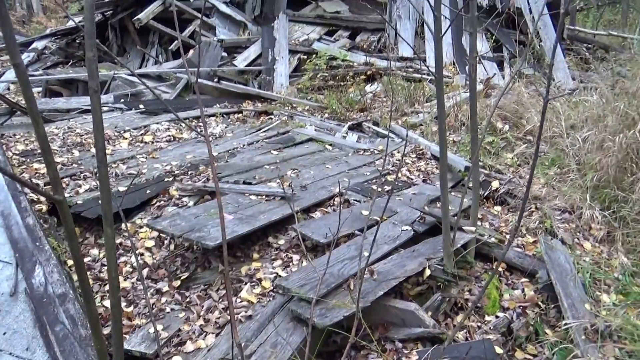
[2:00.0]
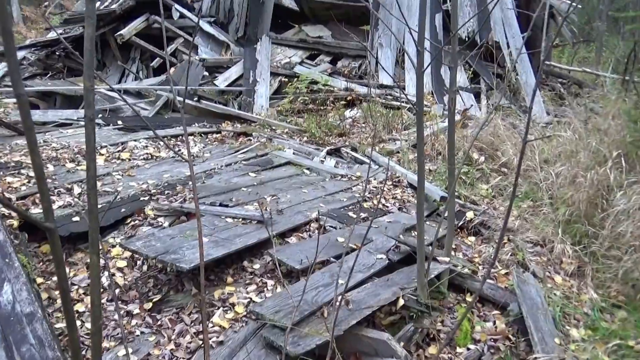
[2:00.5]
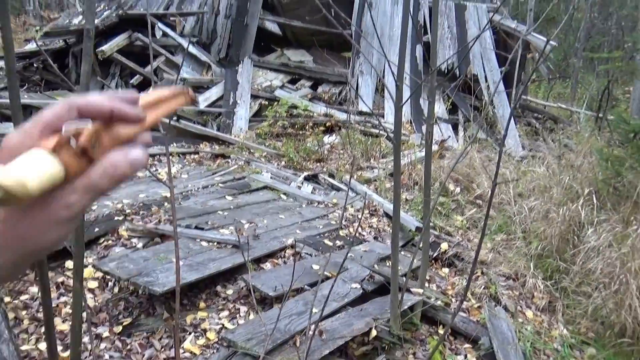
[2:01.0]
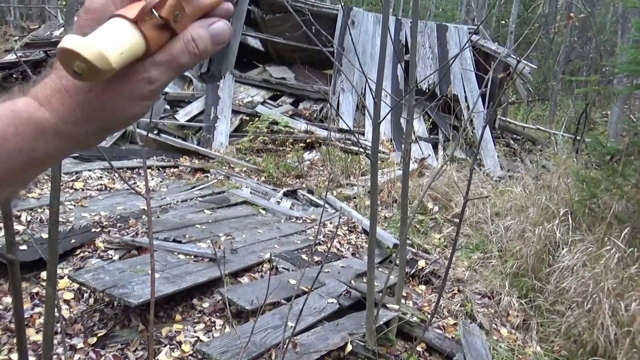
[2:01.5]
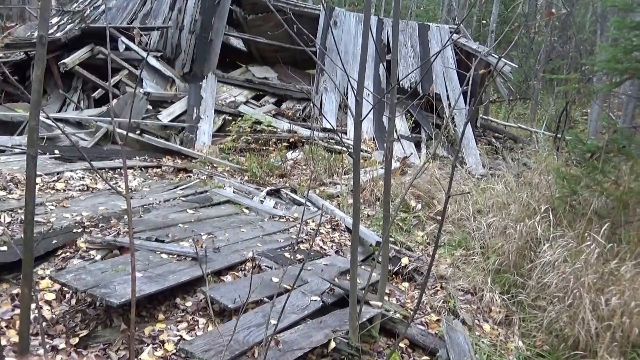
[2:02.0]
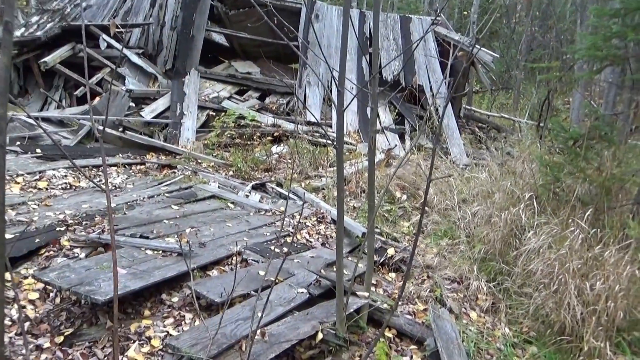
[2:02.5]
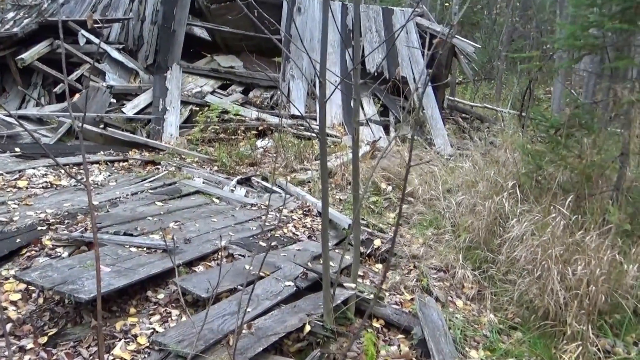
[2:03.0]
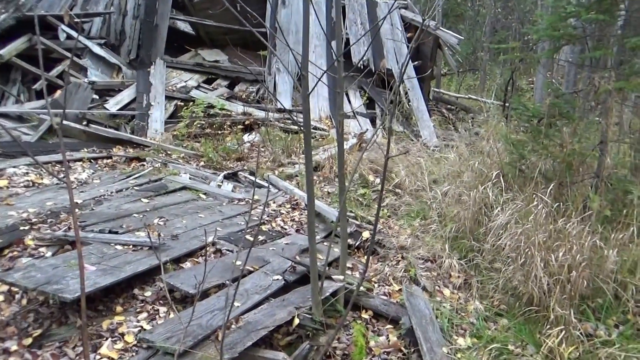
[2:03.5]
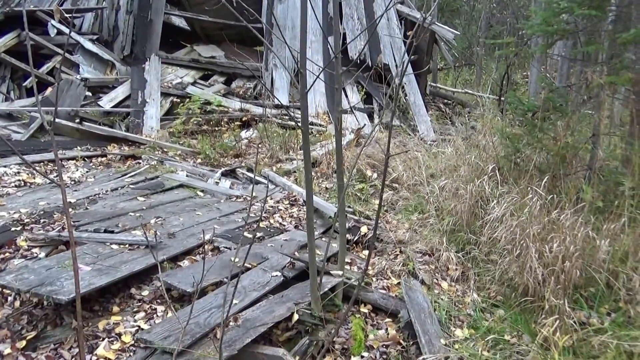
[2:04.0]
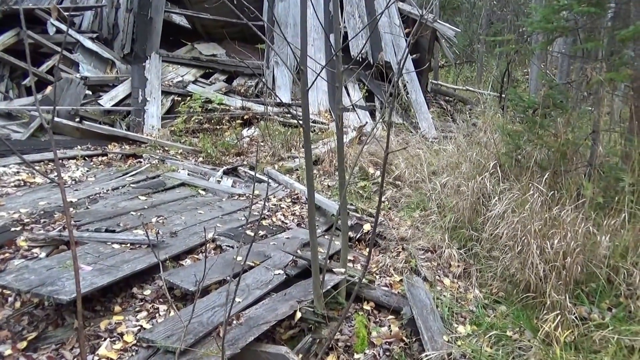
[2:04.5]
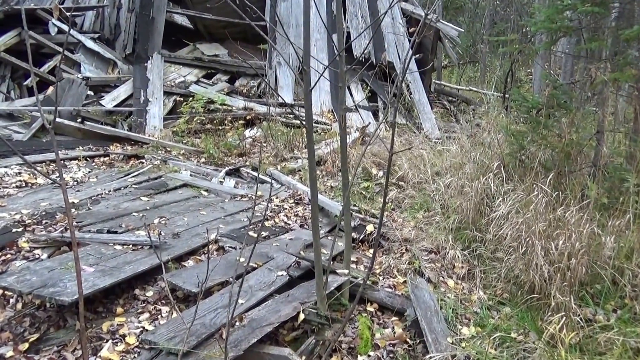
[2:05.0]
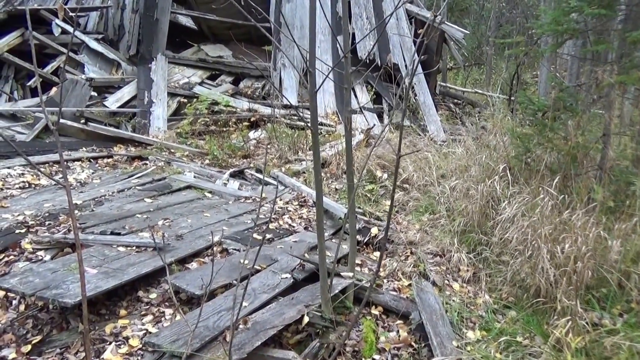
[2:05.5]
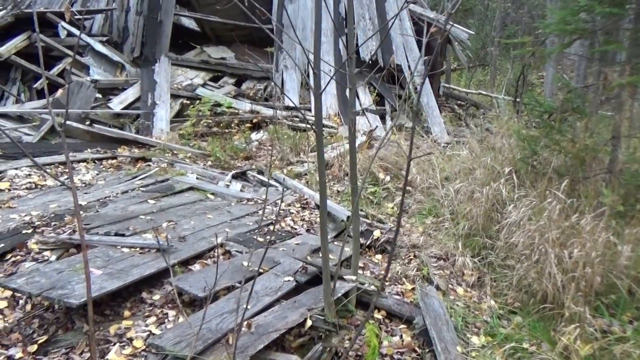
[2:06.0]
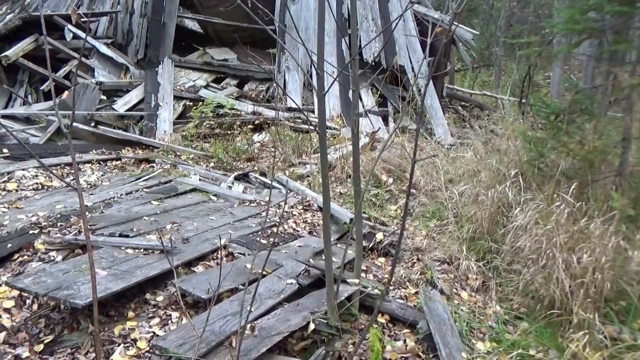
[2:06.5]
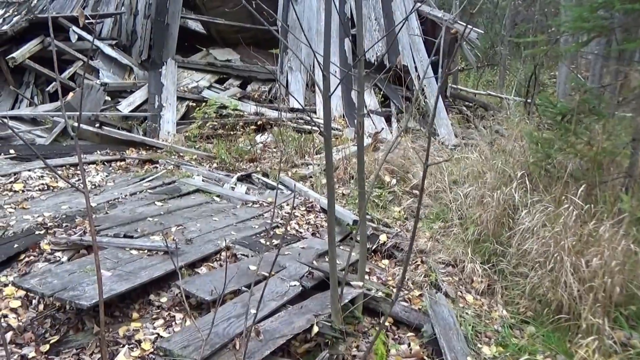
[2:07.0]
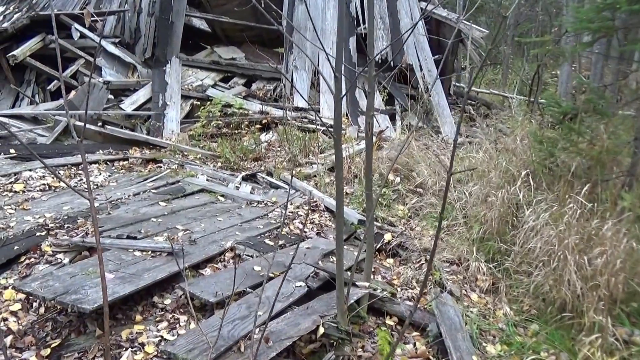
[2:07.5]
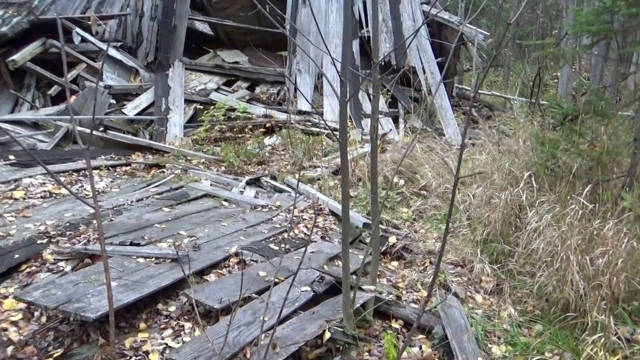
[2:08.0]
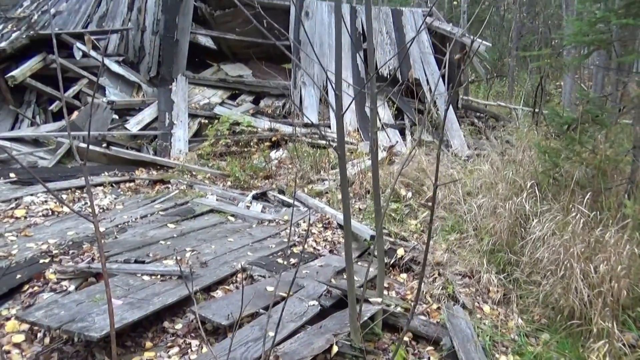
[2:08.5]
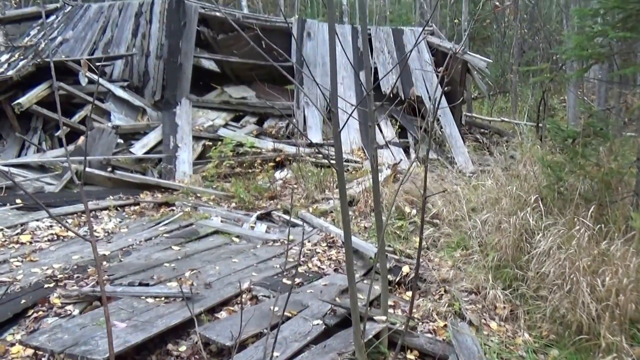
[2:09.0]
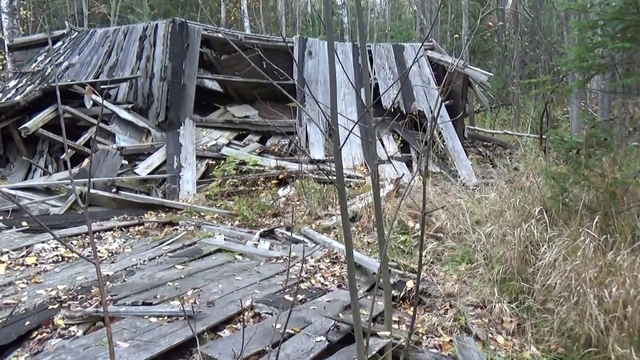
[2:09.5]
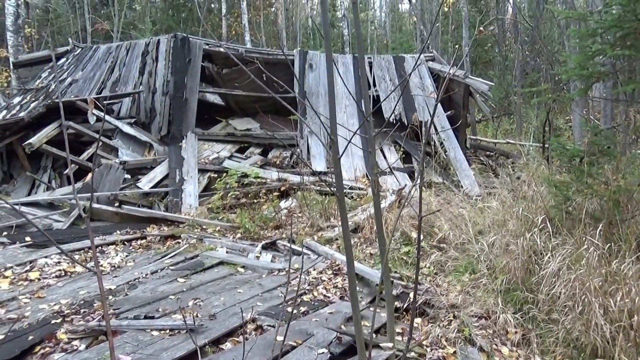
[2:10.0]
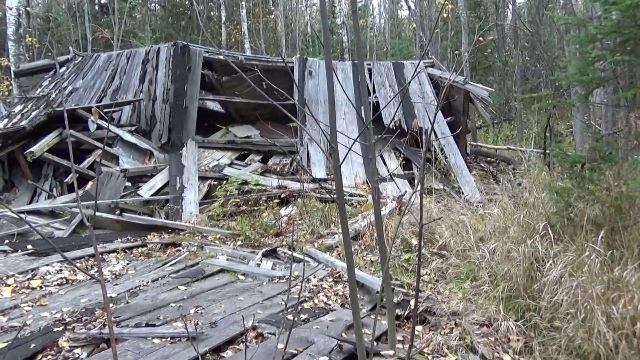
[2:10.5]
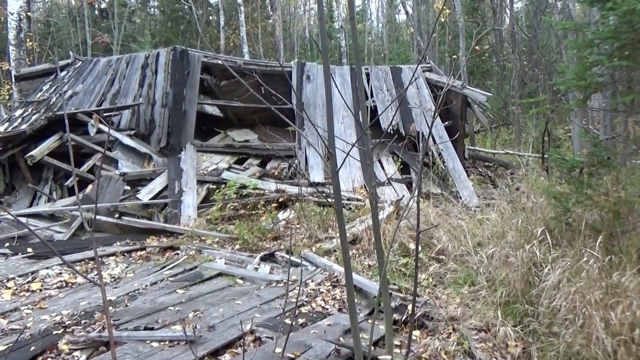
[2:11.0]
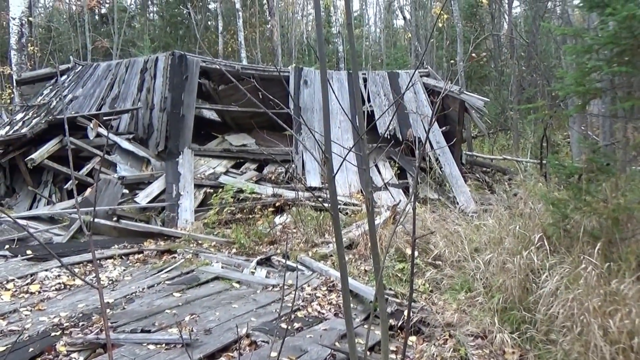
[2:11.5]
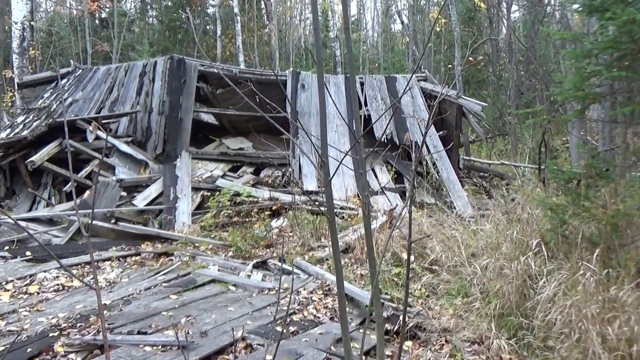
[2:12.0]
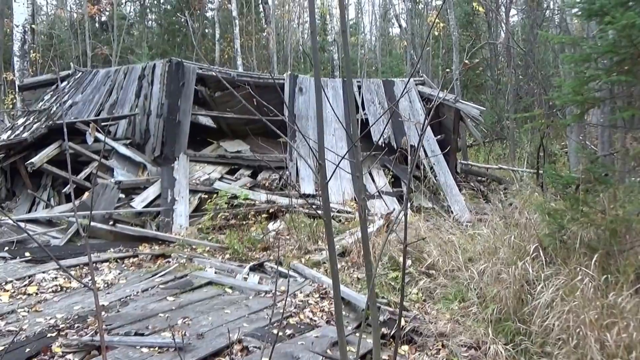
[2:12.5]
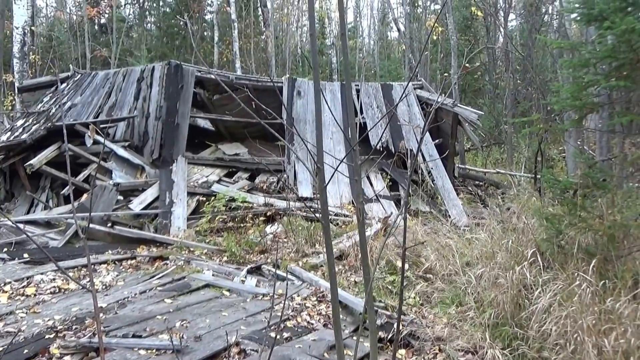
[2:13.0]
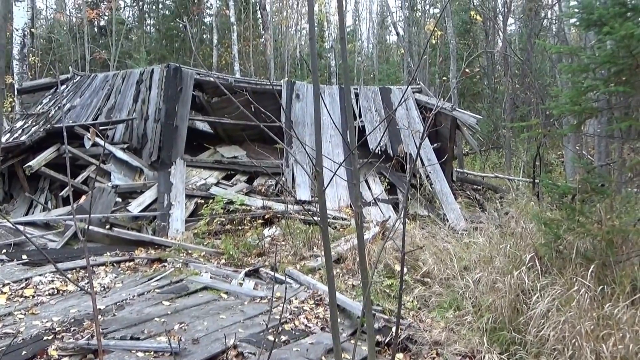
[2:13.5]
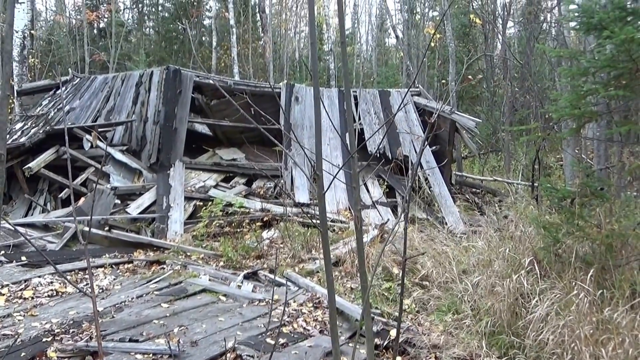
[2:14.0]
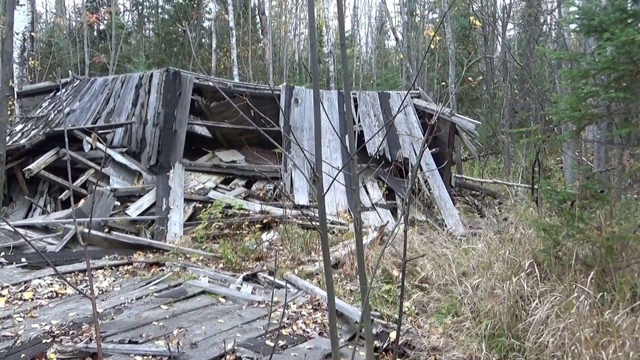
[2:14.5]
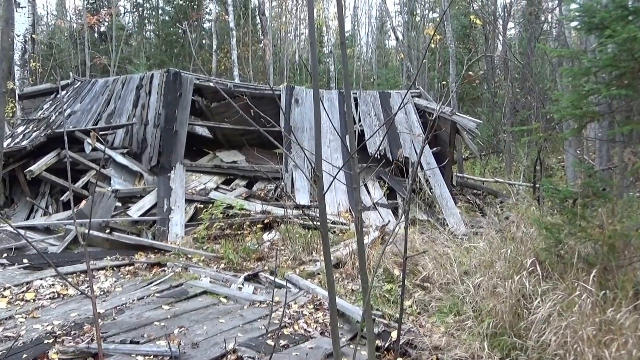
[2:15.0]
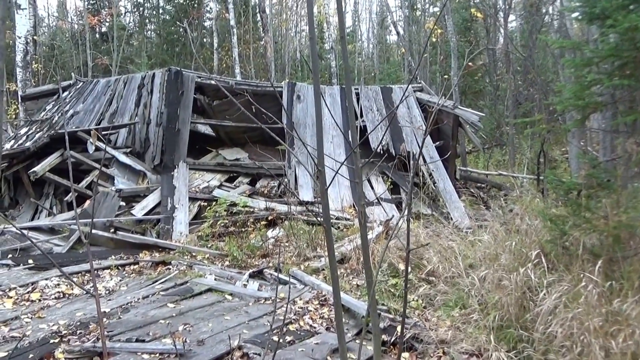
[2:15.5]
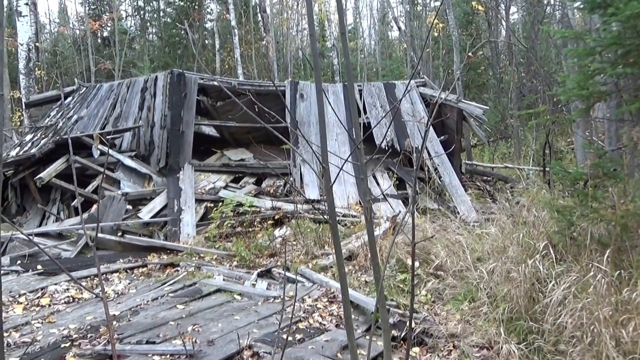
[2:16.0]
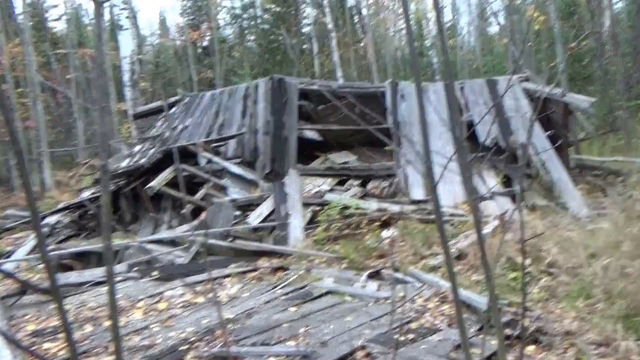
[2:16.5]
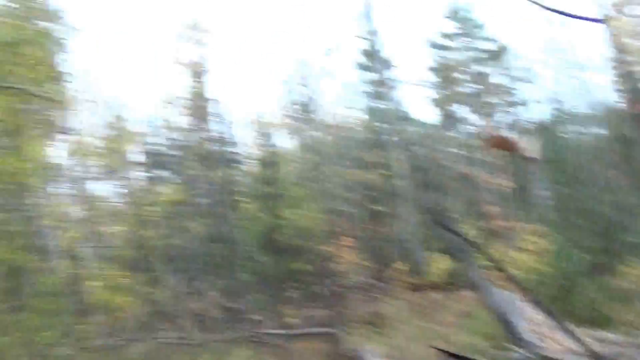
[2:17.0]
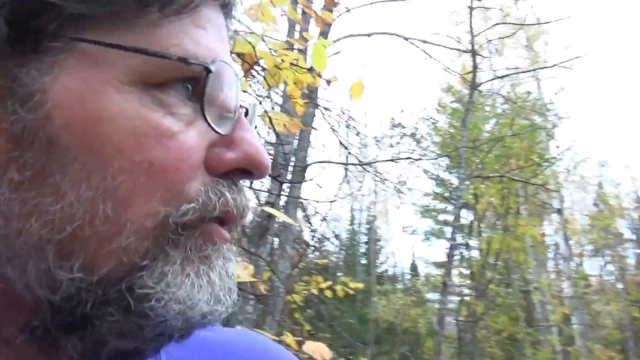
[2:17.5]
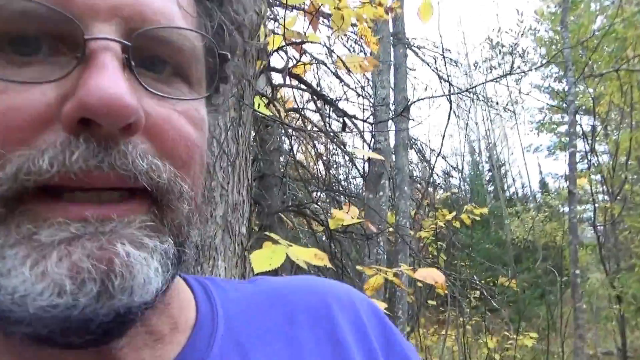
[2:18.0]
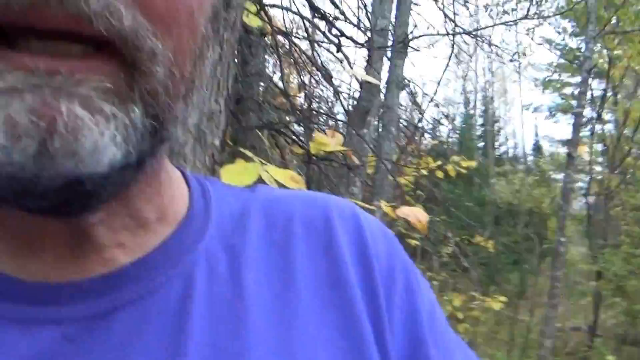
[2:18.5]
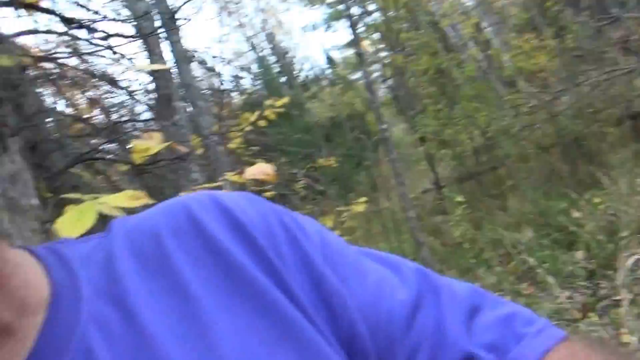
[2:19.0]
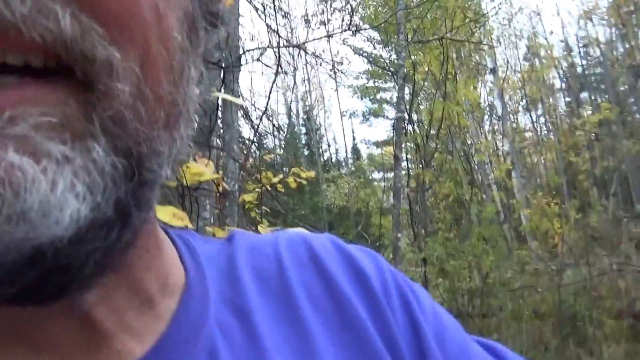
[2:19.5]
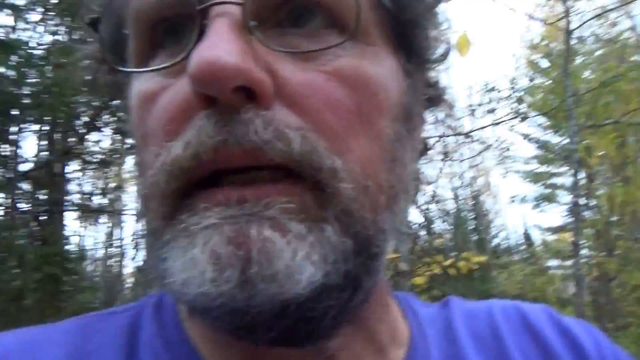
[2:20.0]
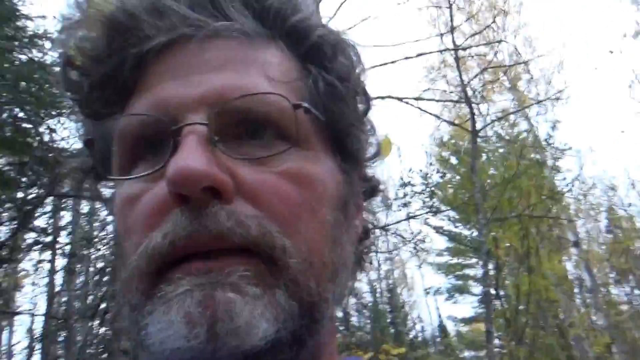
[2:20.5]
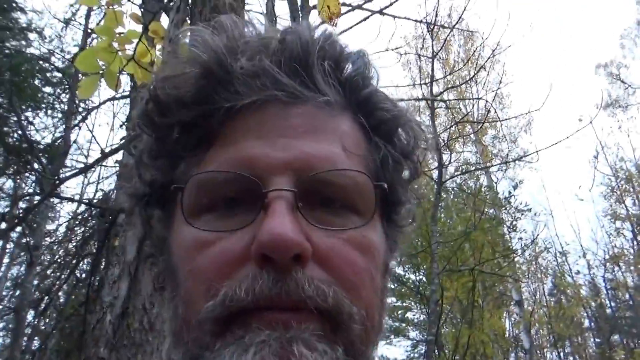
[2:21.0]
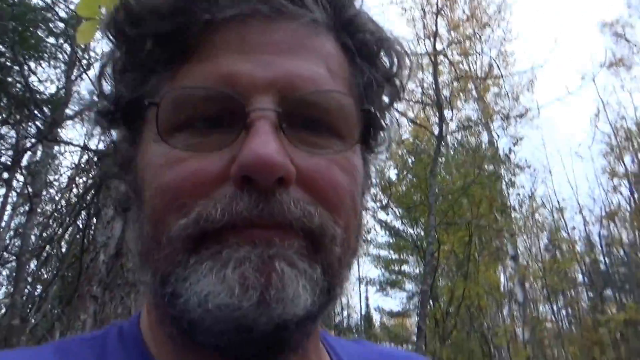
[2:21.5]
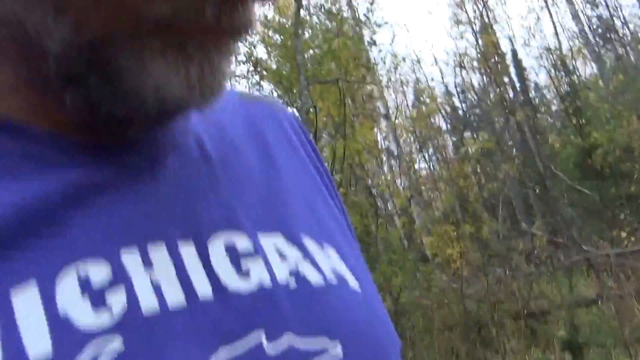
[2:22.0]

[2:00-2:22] The person's hand moves up towards the top left corner of the screen, moving slightly left and right. The camera stays still, focused on the broken structure in the background, with some wooden slats or beams on the ground at the bottom front of the image. The camera pans up slightly, showing the trees in the background and on the right-hand side, where there is also some slightly yellowing grass. The camera then pans 180 degrees all the way to the left to show the man's face. He has a grey beard and moustache, wears glasses and a navy blue t-shirt, and there are tree branches and yellow leaves behind him. He looks like he is talking to the camera. At first the side and front of his face are visible on the left-hand side; the camera rotates further to show most of his head, with greyish dark hair. The camera pans down to the words on his t-shirt, which read "CHIGAN", apparently Michigan with the first letters cropped off the screen.